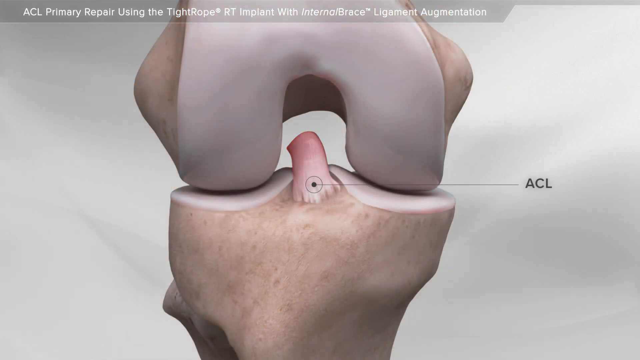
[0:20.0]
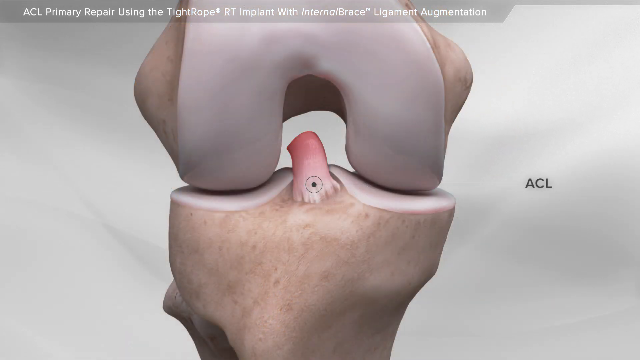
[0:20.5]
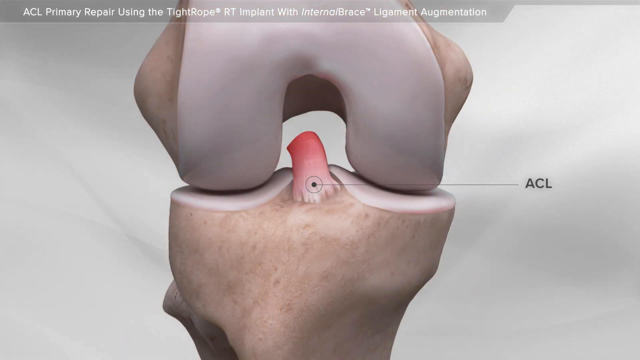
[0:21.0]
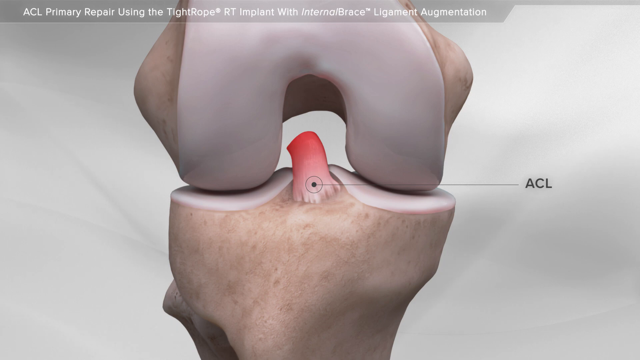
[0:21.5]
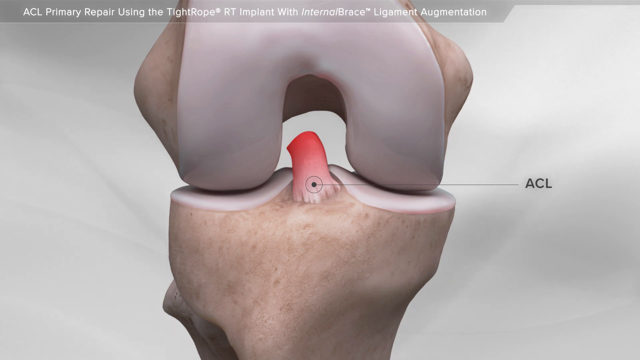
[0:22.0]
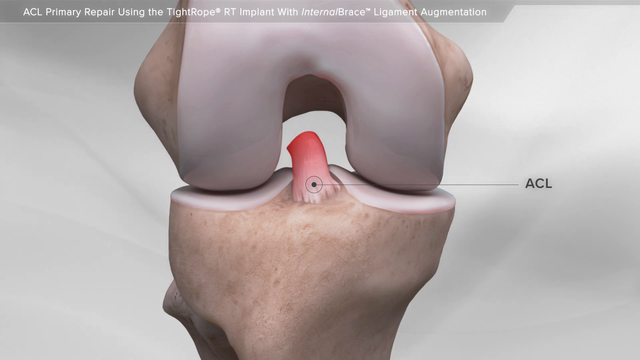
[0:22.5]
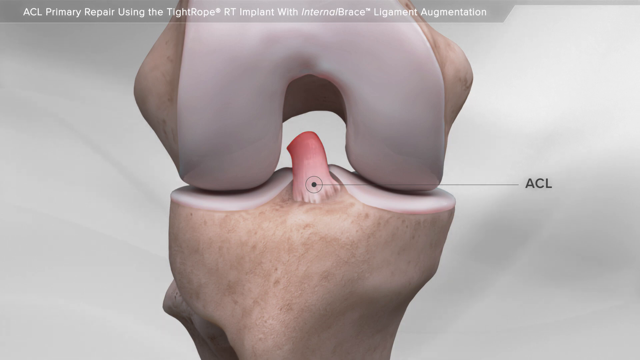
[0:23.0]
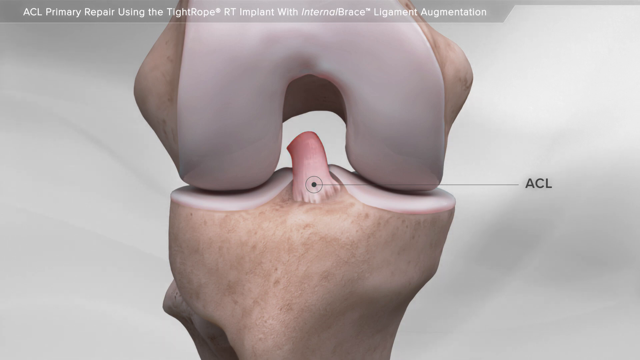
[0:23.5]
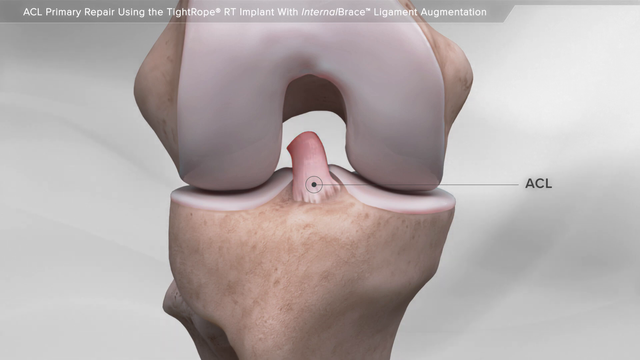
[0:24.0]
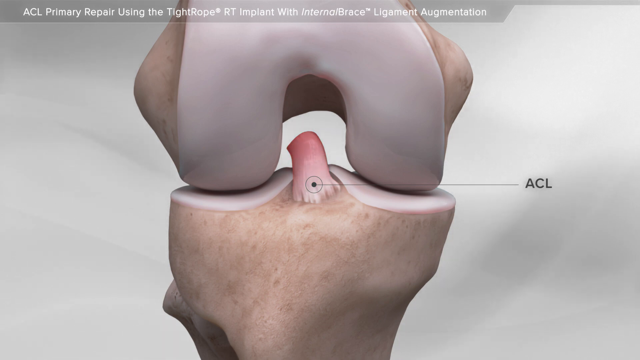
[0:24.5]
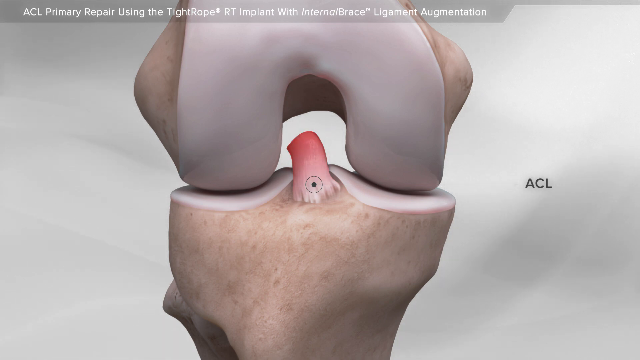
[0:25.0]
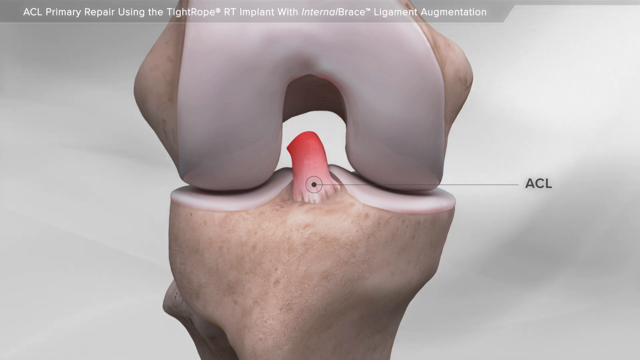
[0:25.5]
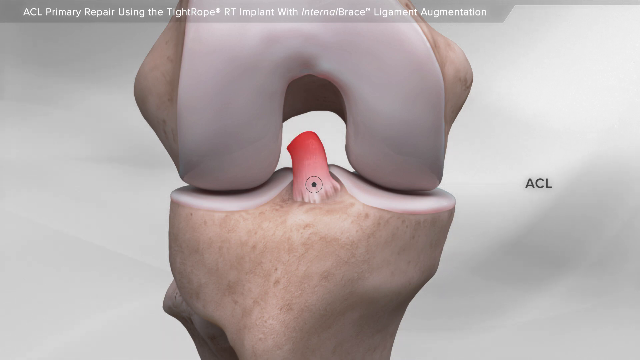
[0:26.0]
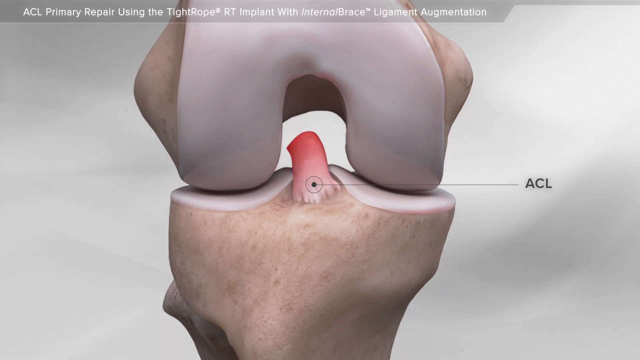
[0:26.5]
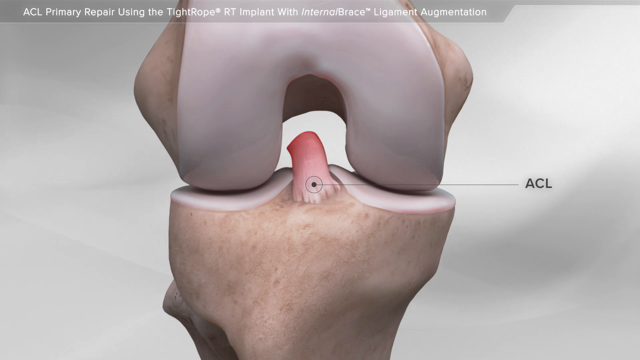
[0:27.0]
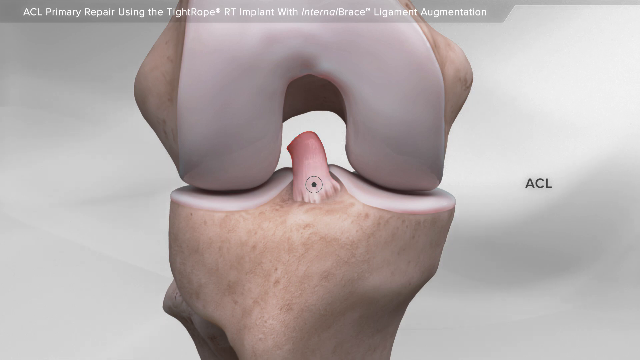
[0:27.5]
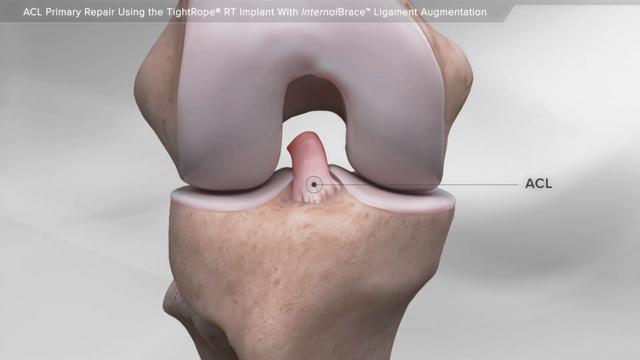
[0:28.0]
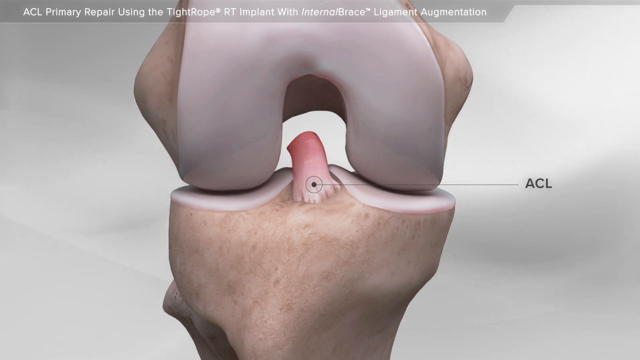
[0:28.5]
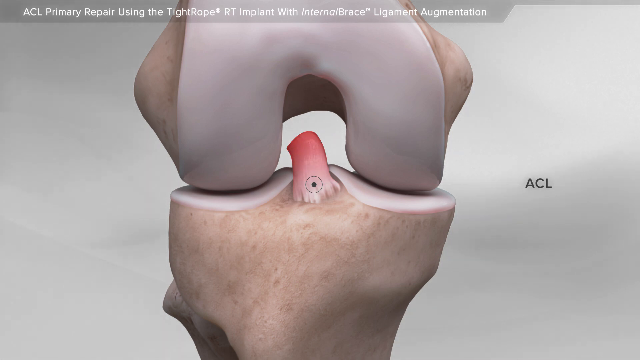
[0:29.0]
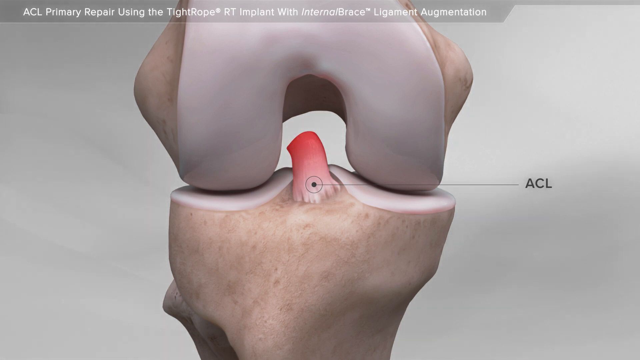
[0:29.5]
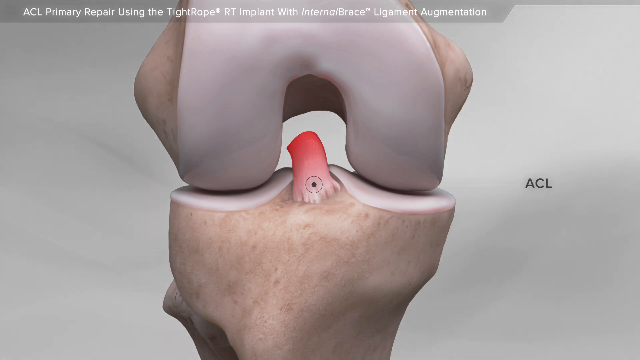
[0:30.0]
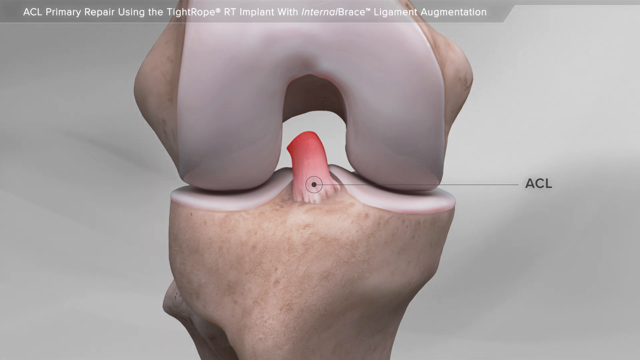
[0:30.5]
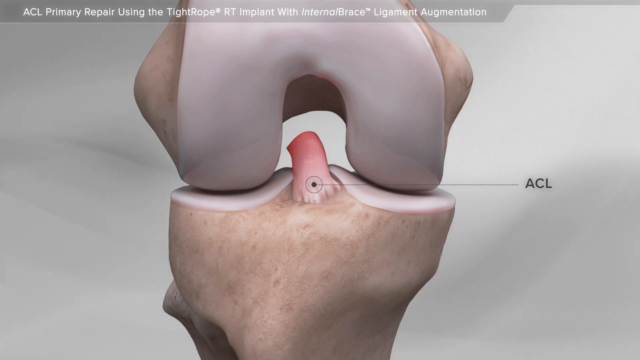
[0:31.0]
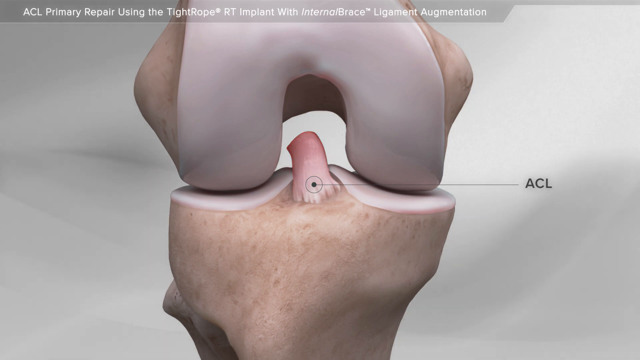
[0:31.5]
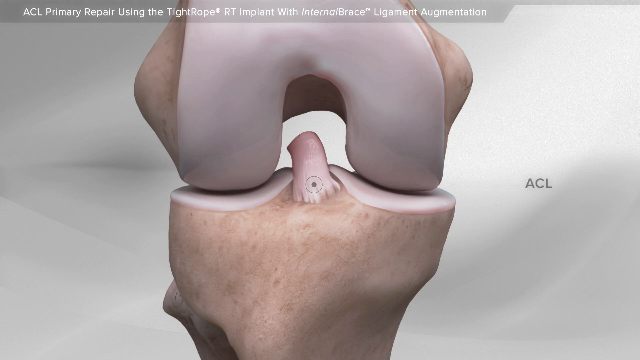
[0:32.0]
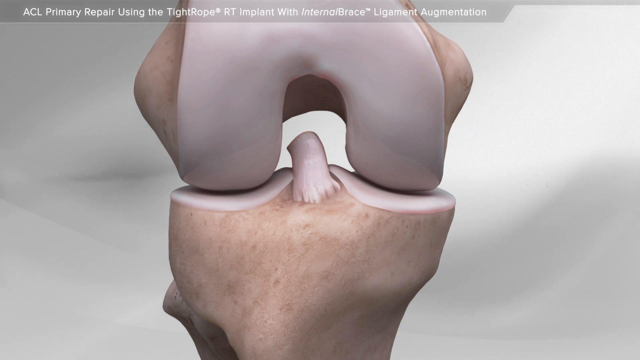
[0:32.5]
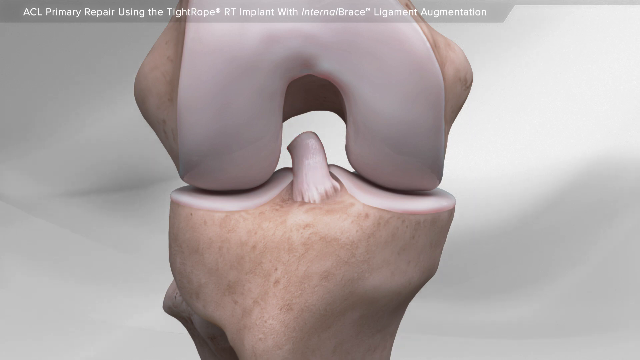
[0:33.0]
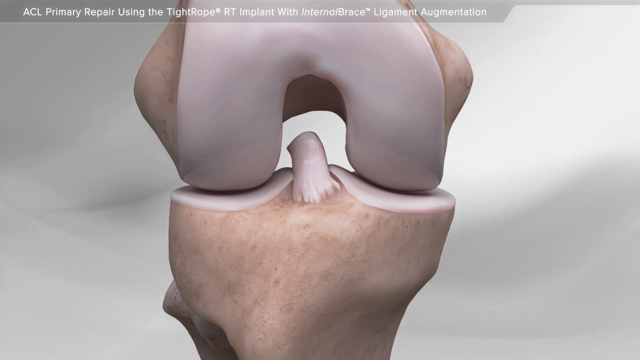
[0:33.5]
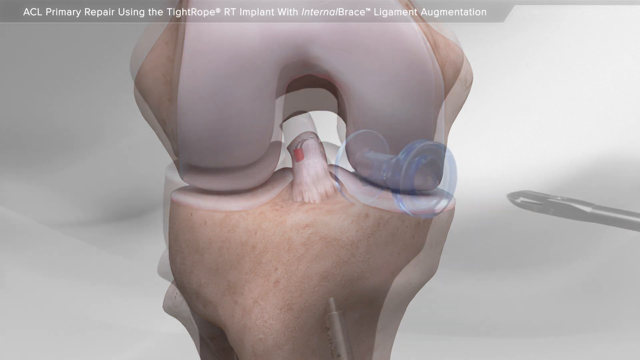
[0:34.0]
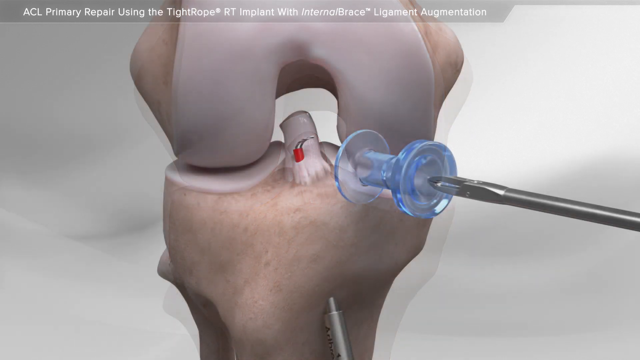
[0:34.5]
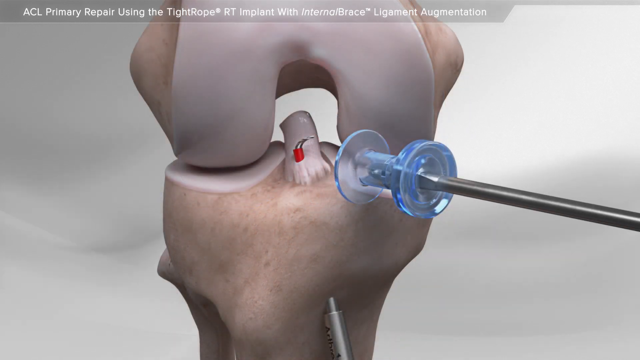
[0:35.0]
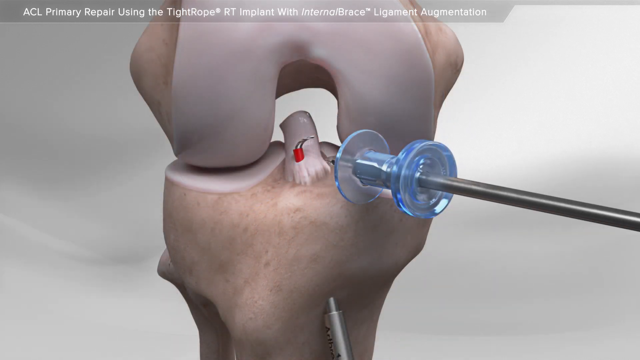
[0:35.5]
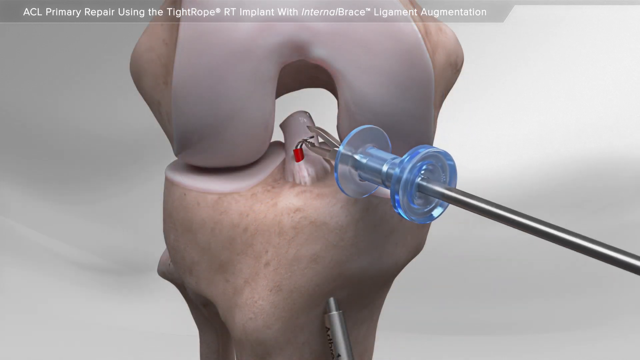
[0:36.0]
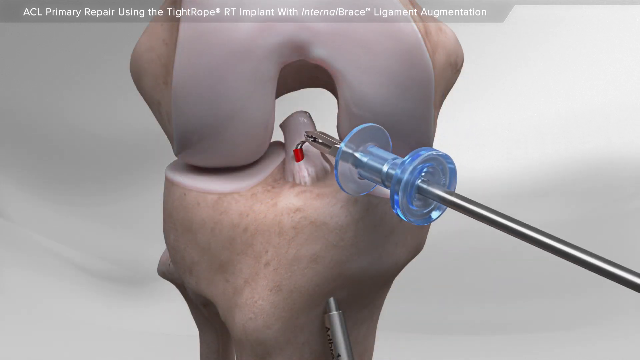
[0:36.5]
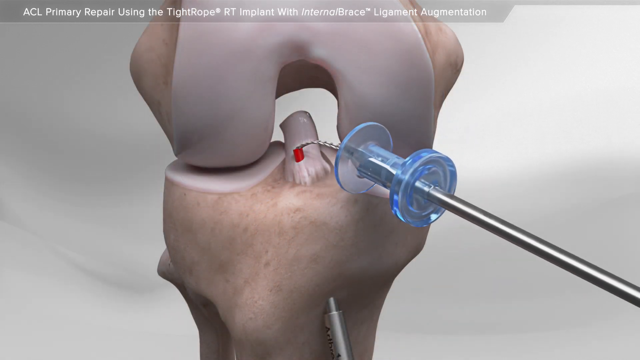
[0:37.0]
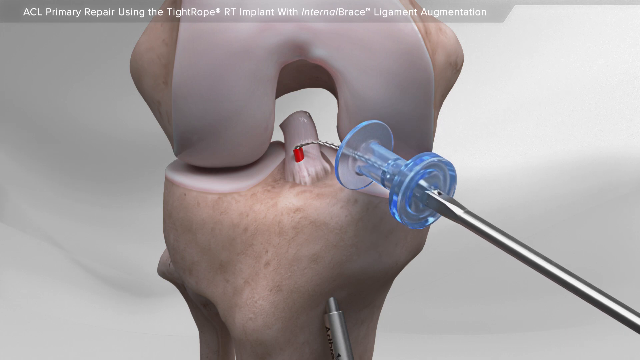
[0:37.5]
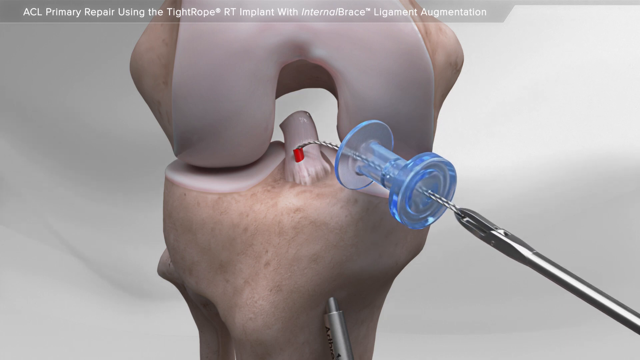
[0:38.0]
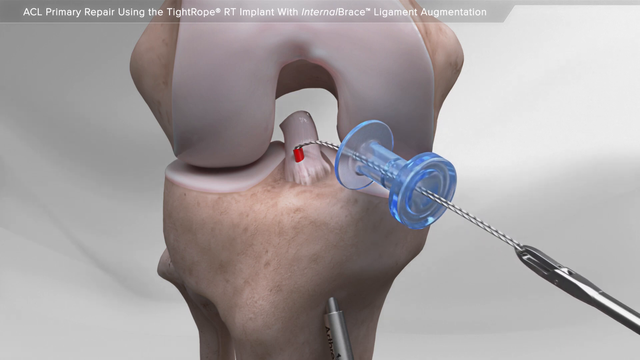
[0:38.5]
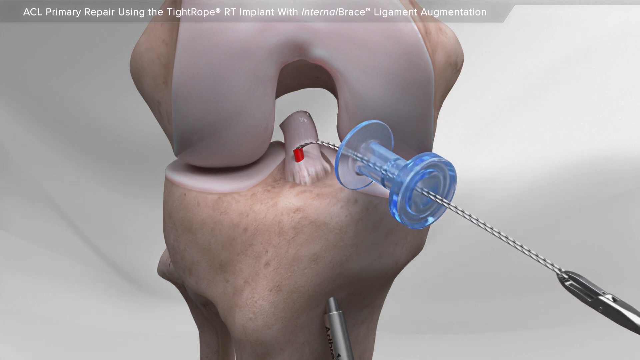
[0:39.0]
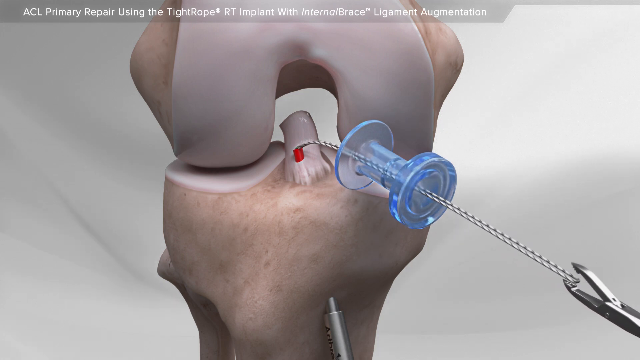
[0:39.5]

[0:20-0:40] What looks to be two connected bones appears, with a small piece sticking out between them where they connect. A line is drawn to it, with letters. Text on the image includes "tightrope RT implant with internal brace ligament augmentation." The bone turns kind of a grayish color, and what looks to be something is inserted into a tube in front of the bone area, going into one of the areas. There is some sort of red mark on one of the fragments. A long piece pulls a string out through the tube, which is a clearish blue color that the string can be seen through. There appear to be some sort of grippers on the end of the silver piece that is pulling the string.